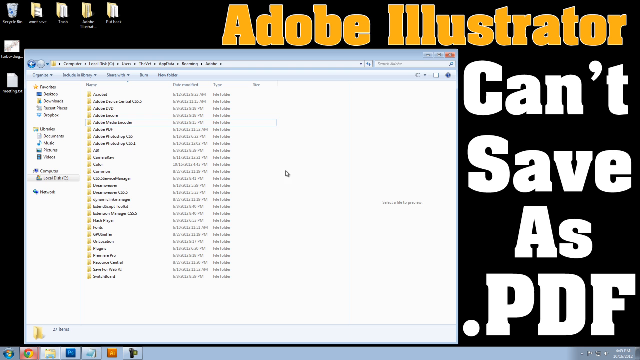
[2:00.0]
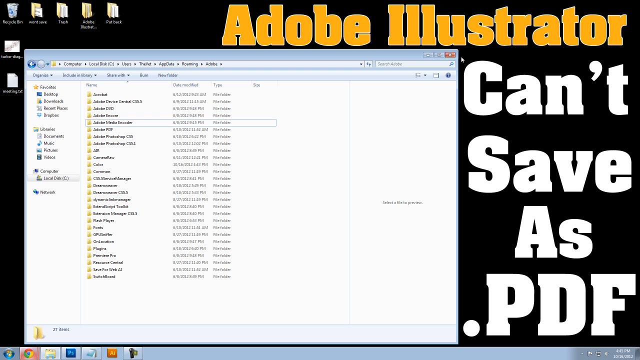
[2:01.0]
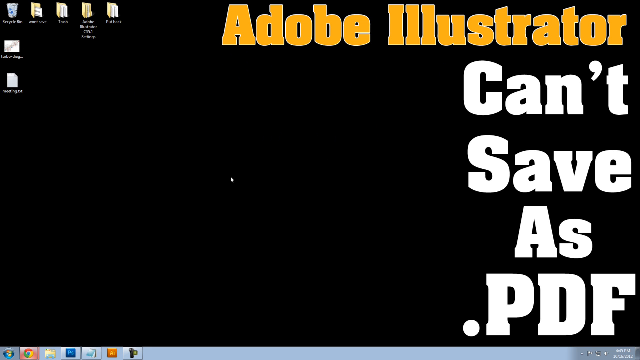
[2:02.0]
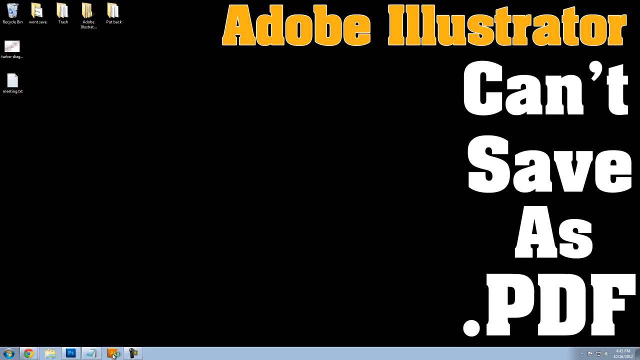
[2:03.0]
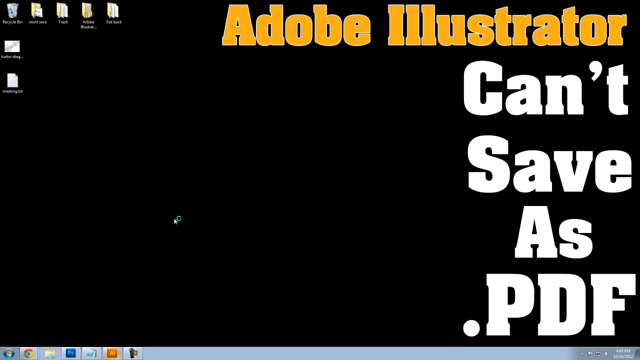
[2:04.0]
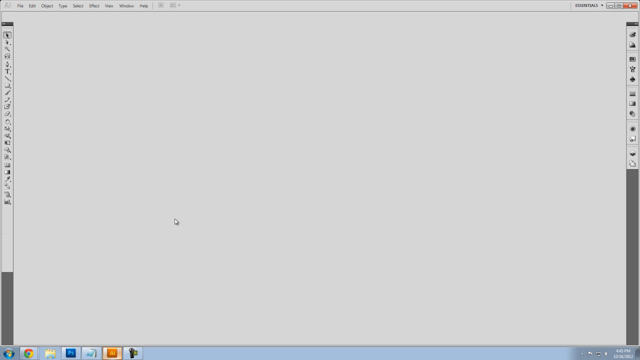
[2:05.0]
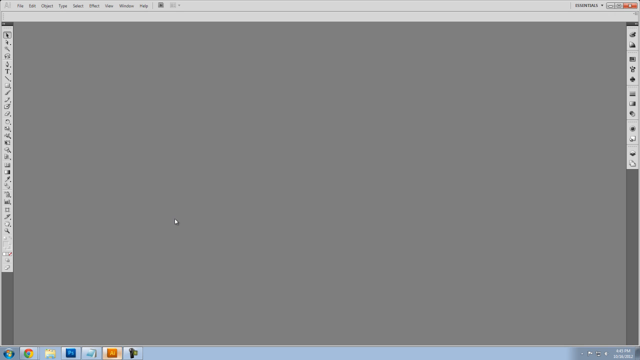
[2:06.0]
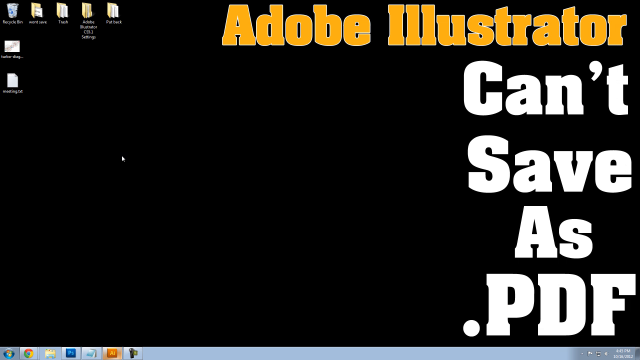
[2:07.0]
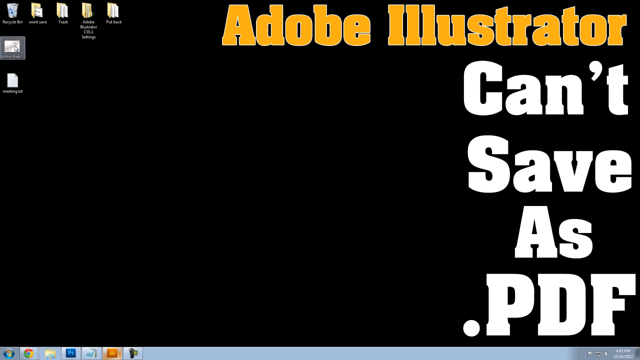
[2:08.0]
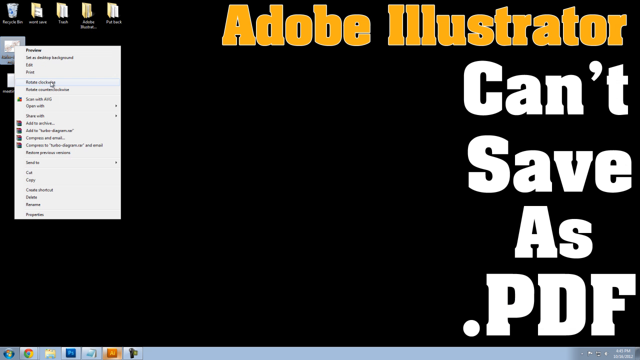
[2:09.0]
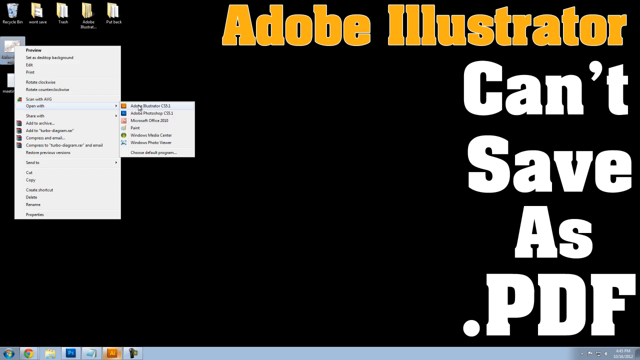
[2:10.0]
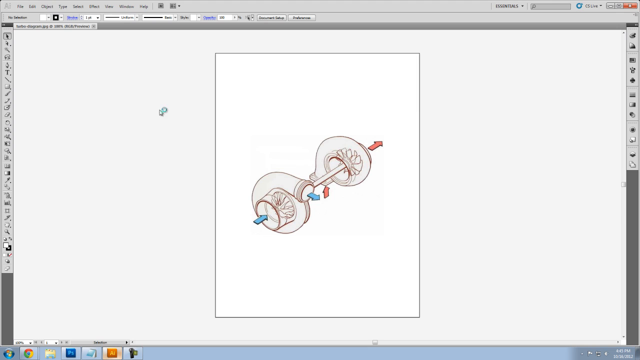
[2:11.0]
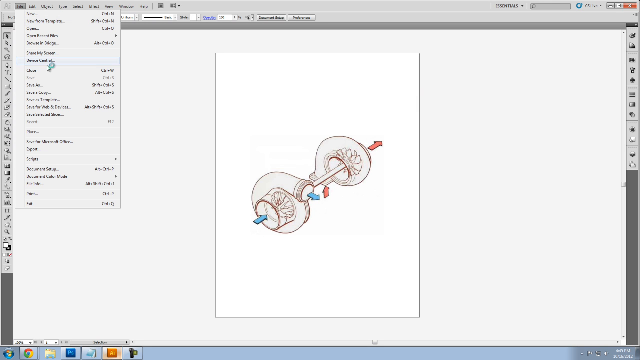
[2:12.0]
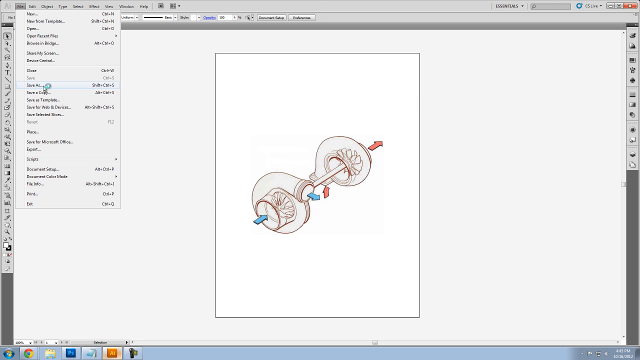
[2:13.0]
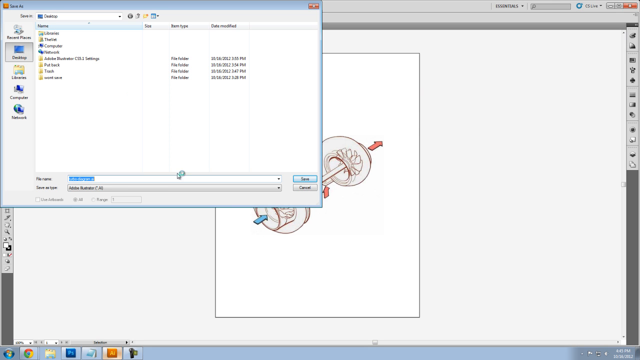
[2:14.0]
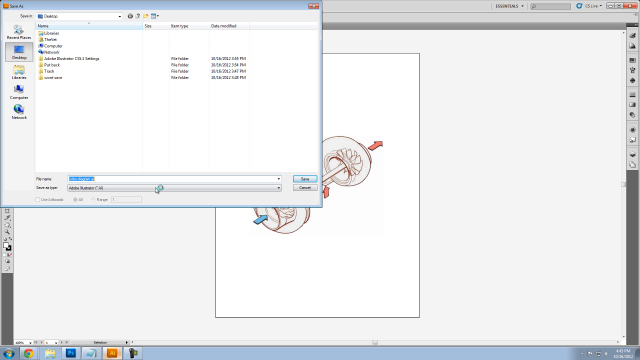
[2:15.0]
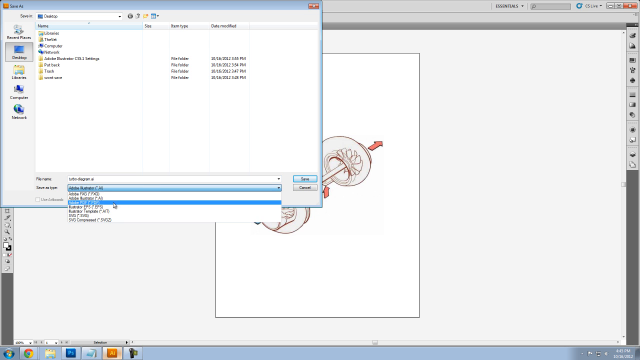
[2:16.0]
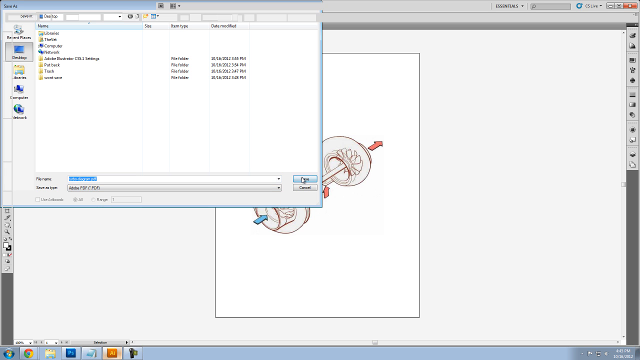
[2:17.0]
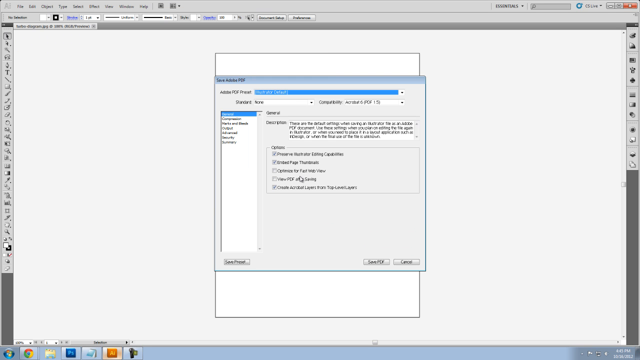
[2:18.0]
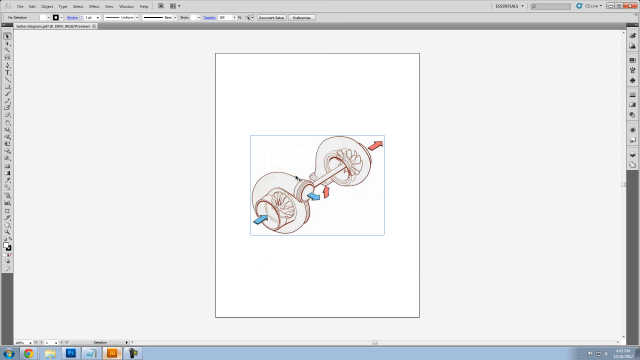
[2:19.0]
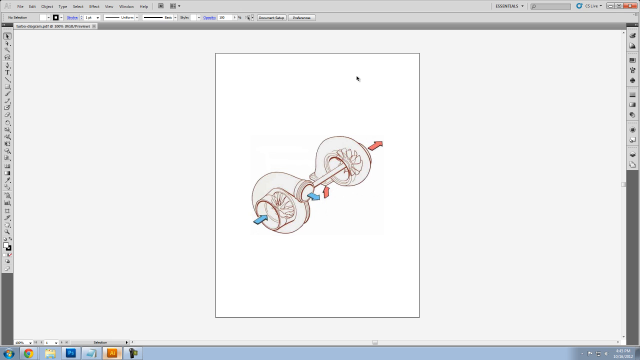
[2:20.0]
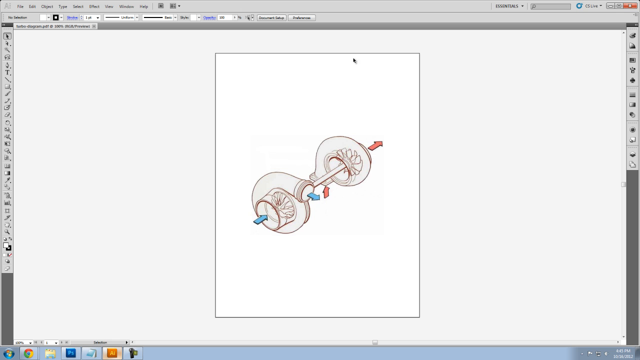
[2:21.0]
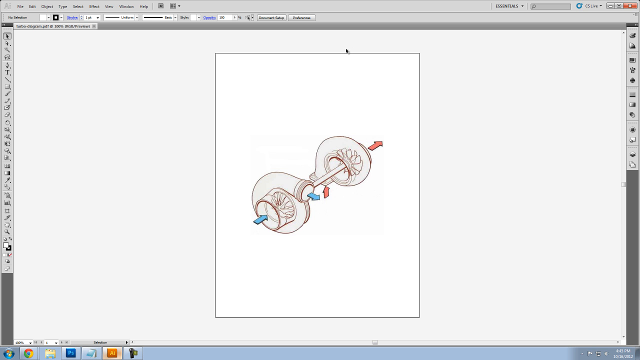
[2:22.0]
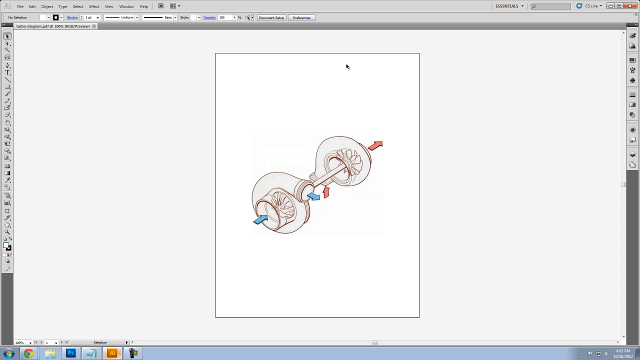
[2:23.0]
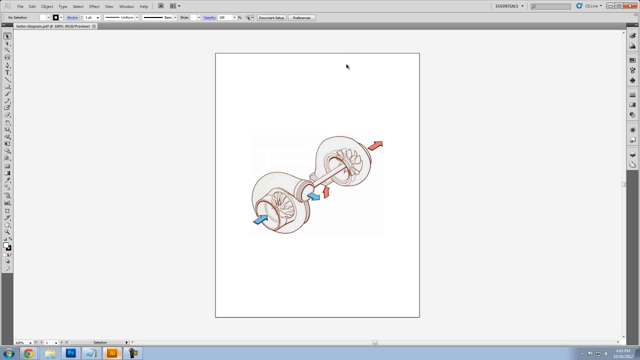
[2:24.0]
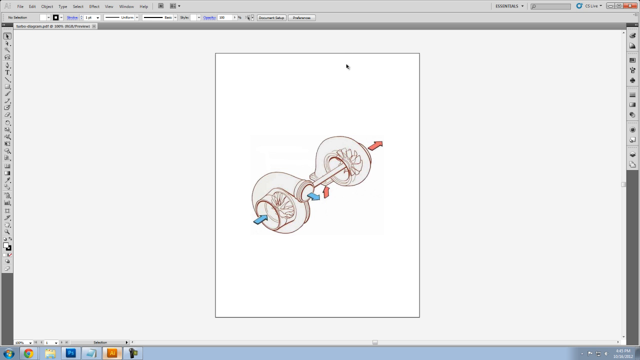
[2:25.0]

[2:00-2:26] A window is open and then closed. The mouse moves around the screen, and a new window opens and disappears, perhaps the Illustrator window flashing up and closing. The view returns to the original picture of the fan or turbine diagram, which the user is apparently going to export to PDF, perhaps successfully this time.